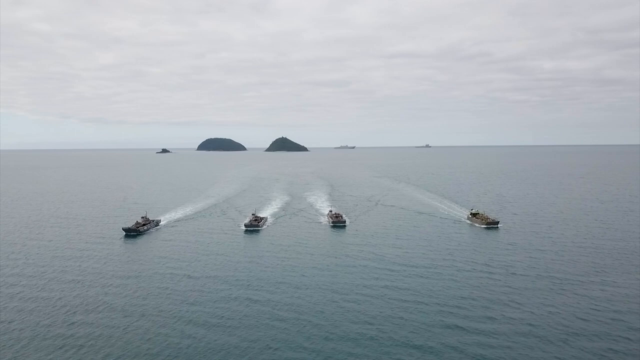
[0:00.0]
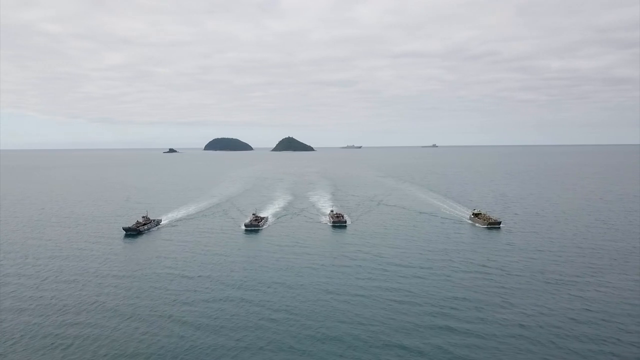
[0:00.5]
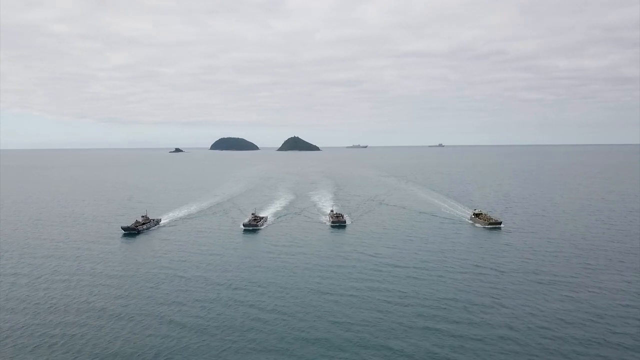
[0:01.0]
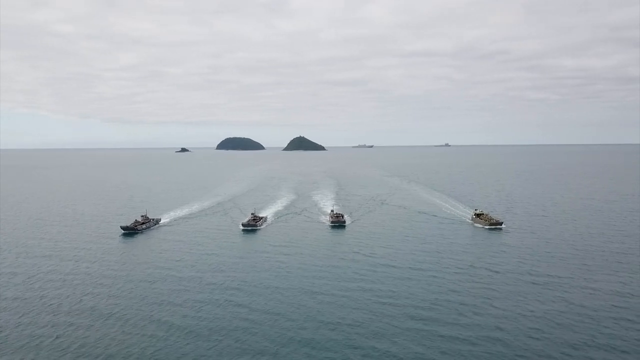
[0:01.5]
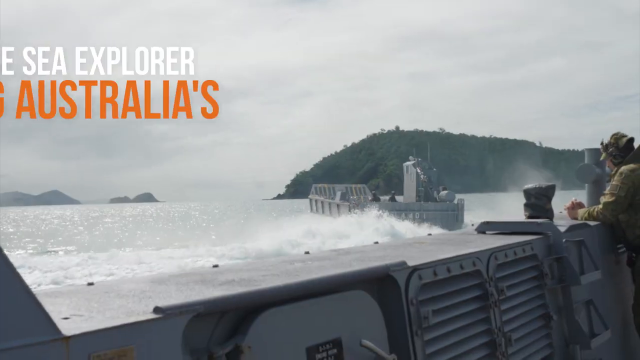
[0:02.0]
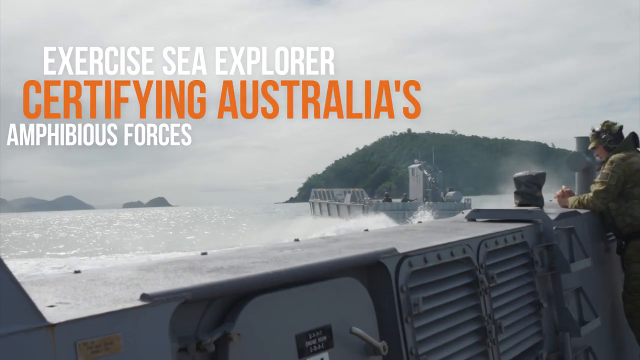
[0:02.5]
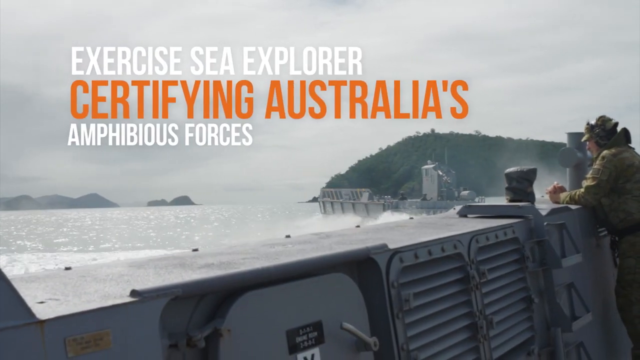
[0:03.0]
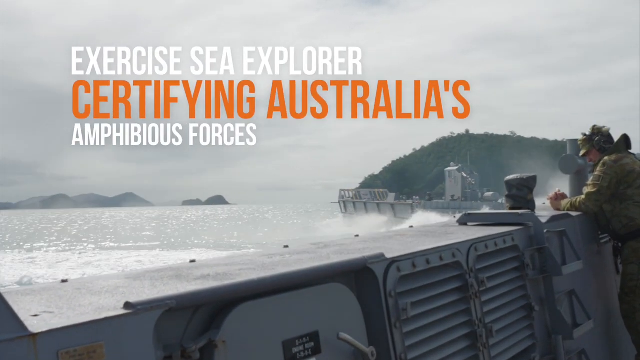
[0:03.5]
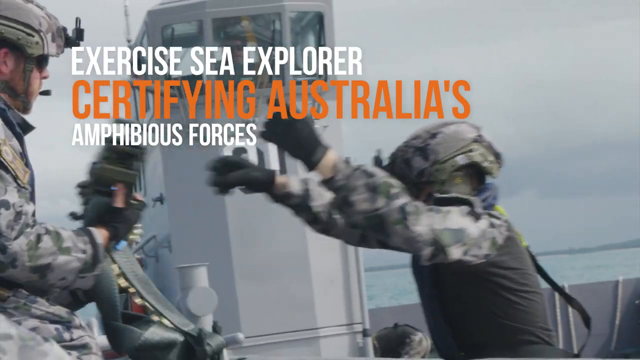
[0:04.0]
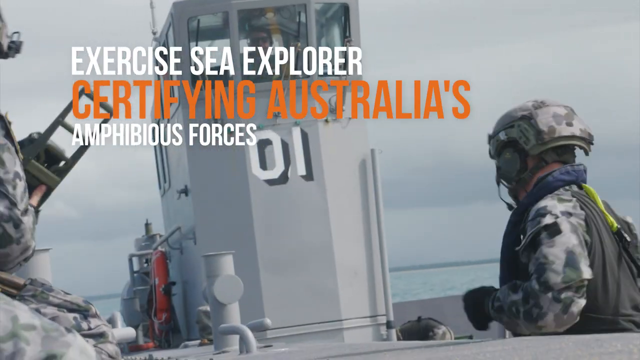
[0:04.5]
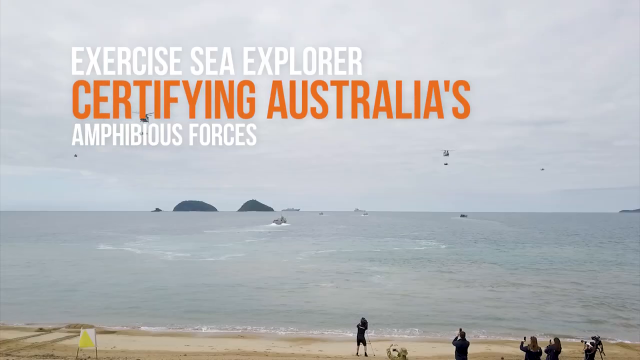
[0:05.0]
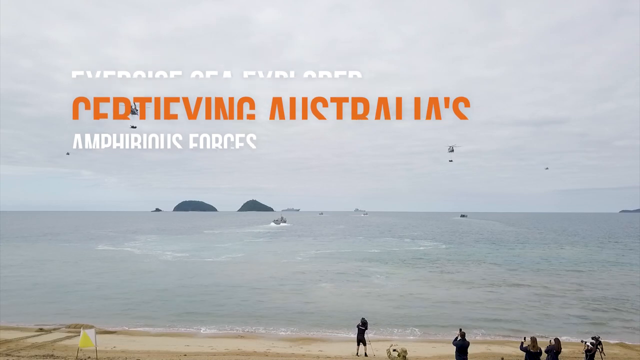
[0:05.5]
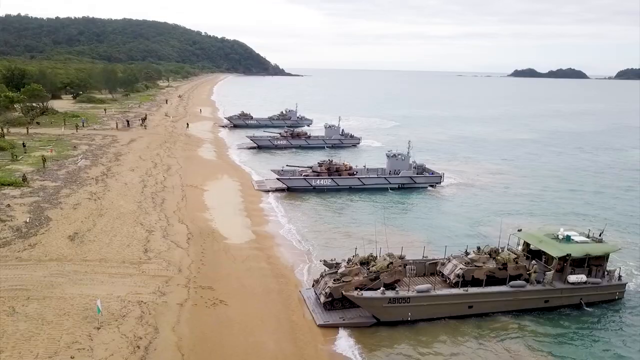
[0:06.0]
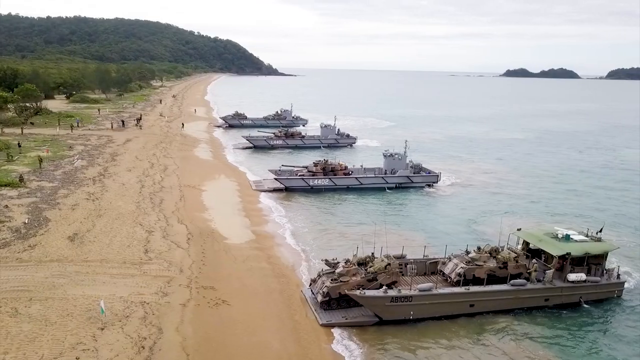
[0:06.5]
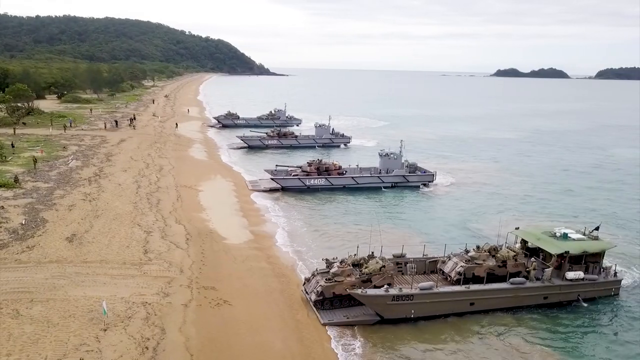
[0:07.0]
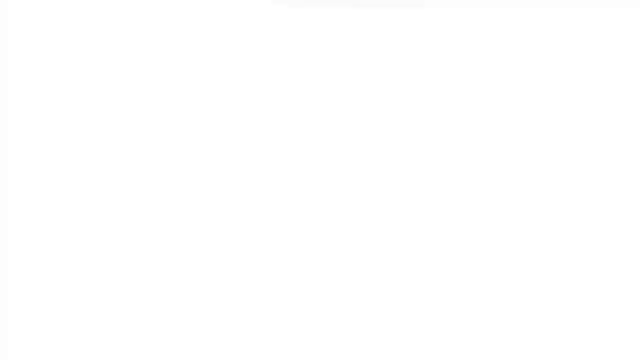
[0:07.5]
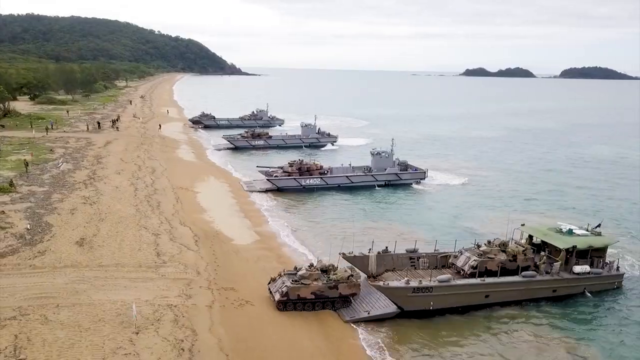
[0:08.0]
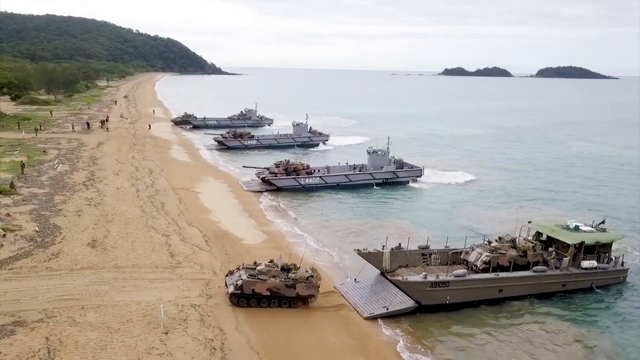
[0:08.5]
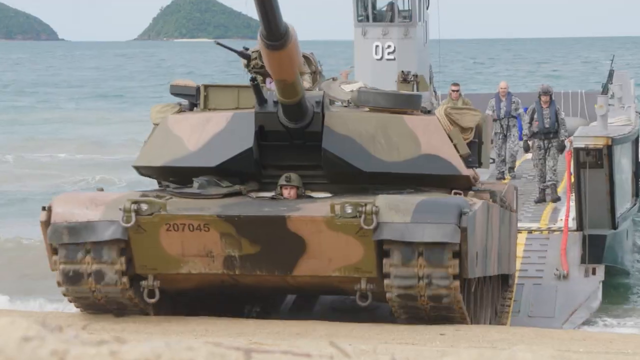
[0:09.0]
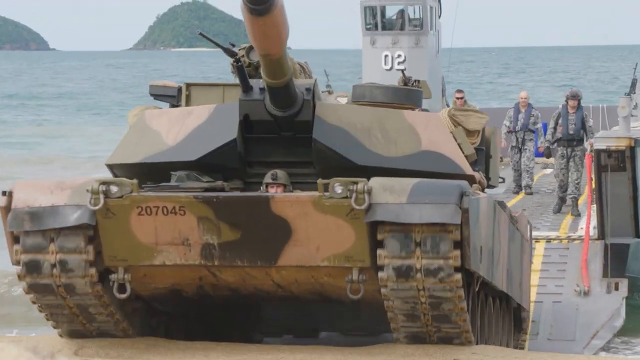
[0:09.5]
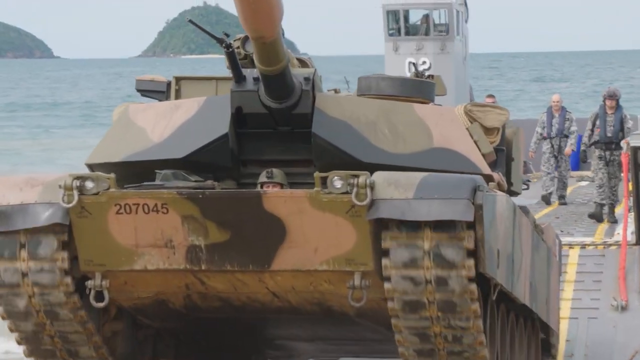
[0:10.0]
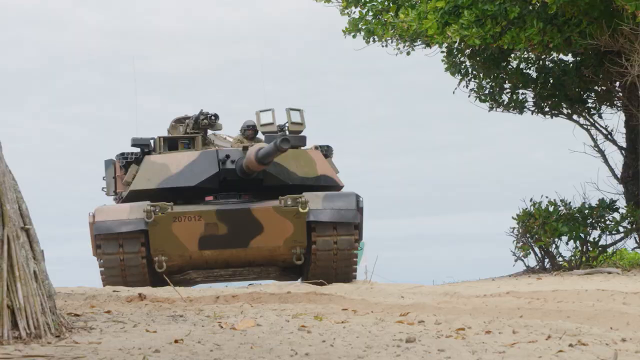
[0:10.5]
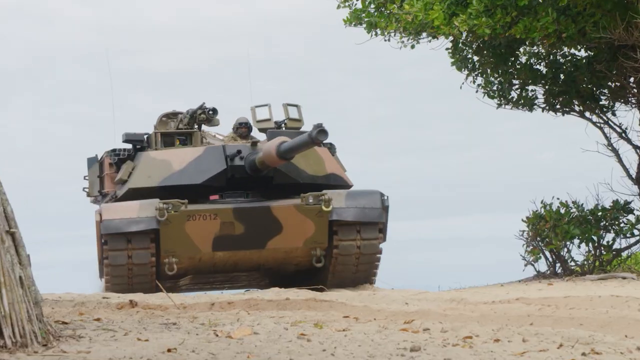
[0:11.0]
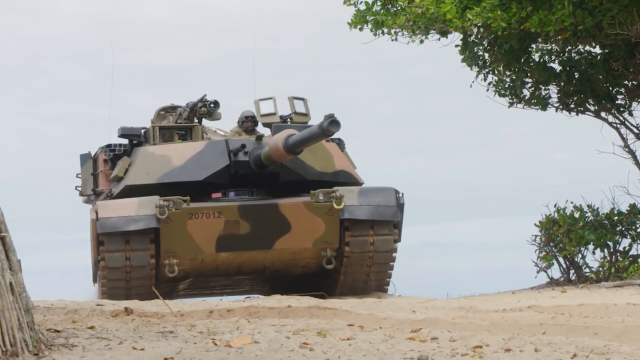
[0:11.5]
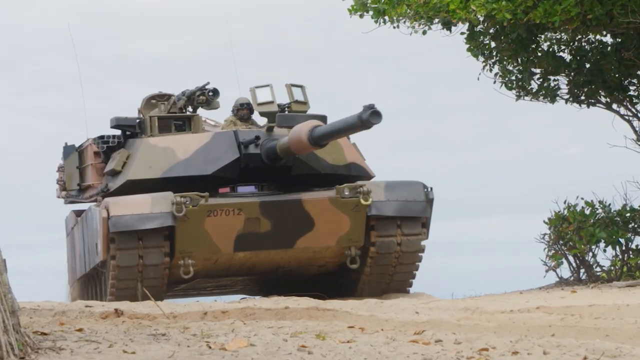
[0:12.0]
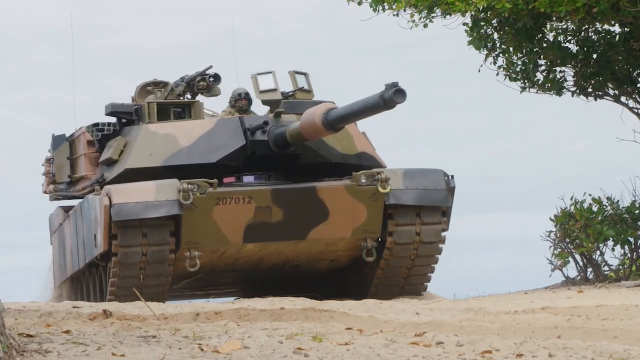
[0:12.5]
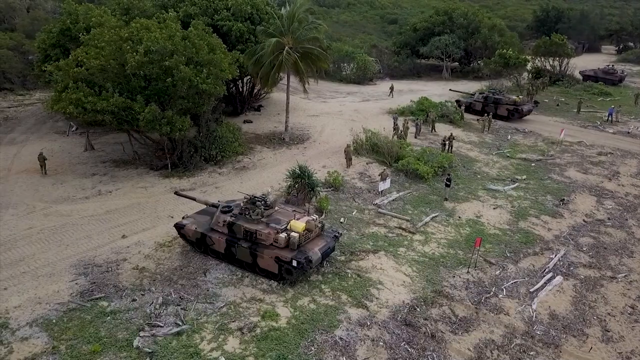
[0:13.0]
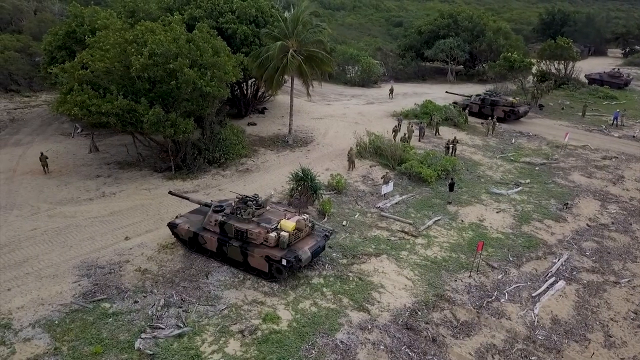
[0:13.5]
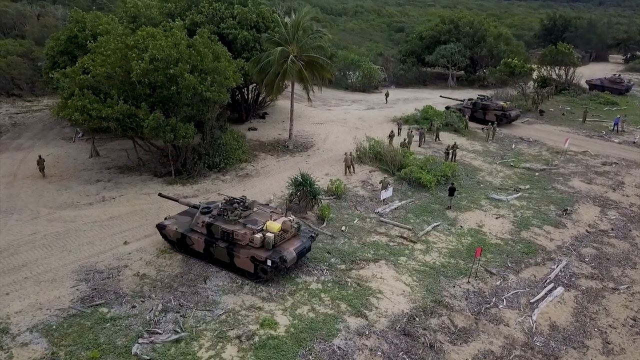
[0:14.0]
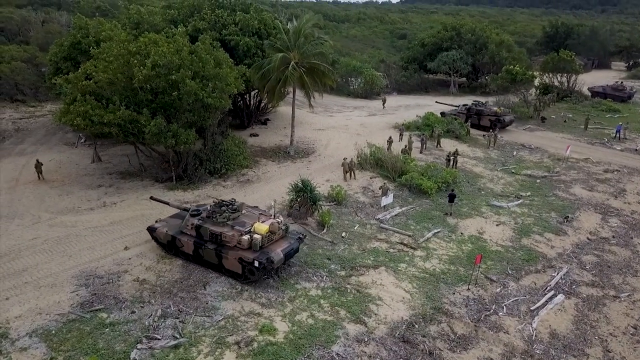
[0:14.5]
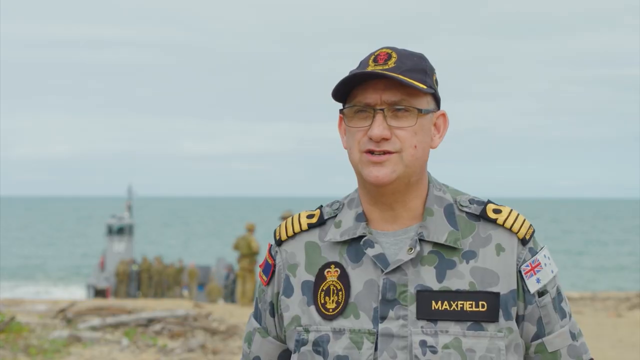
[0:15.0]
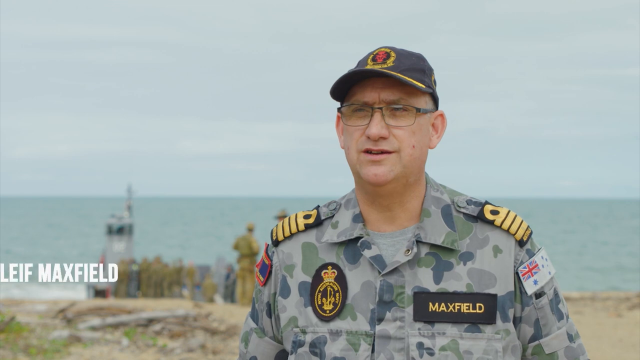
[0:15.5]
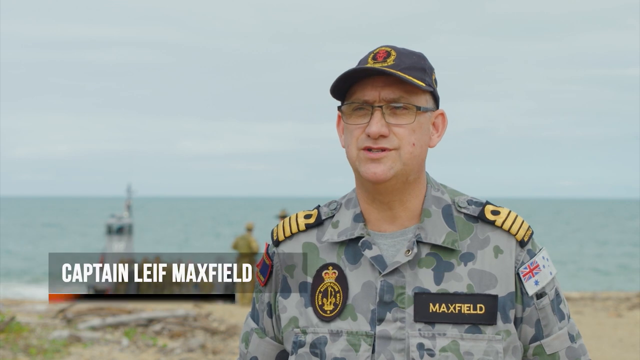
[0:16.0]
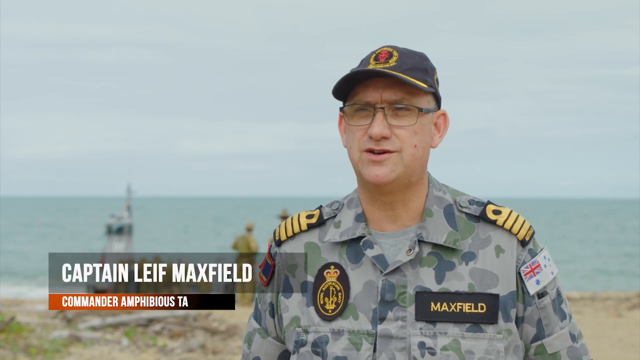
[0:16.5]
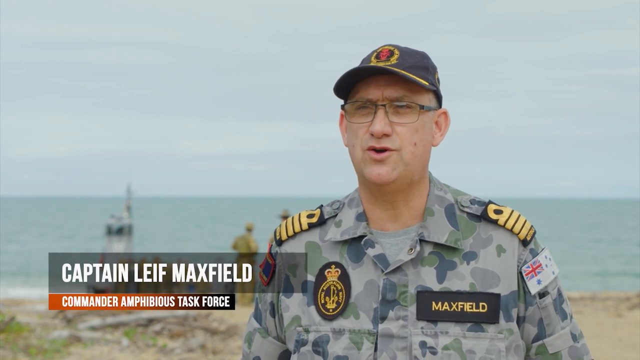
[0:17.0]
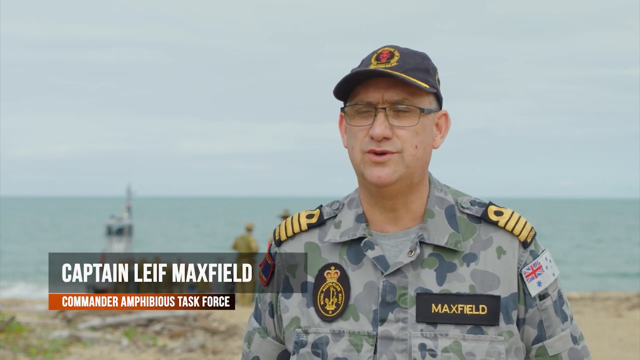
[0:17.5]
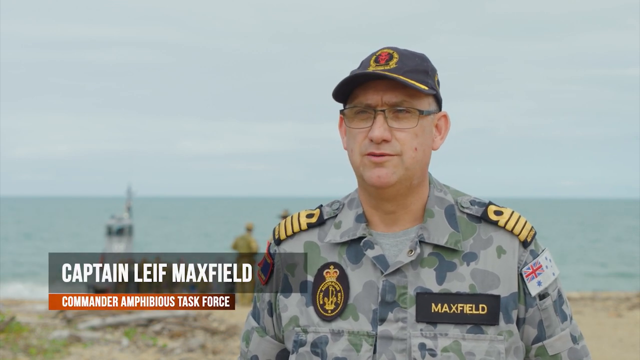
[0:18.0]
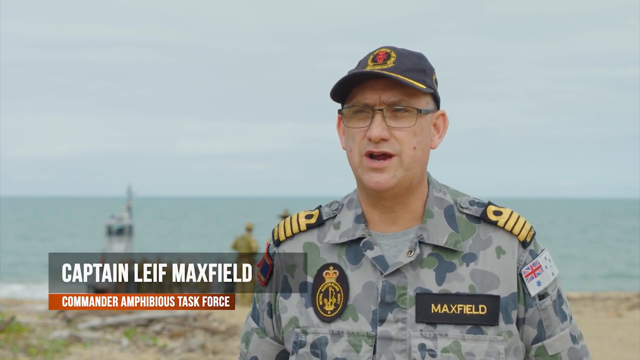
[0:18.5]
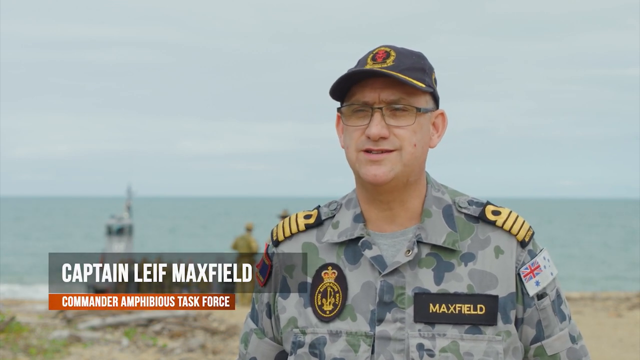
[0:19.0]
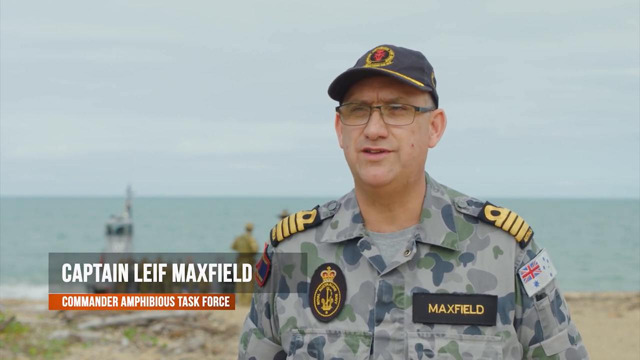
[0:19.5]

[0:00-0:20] Four boats move through an ocean, travelling from the bottom of the screen toward the top and creating waves as they go. Two rock formations are in the back and a few other boats are on the horizon. It is a gray, dark, gloomy day. The camera pans from right to left. A screen then reads "Exercise Sea Explorer, certifying Australia's amphibious forces." Two men in gray camouflage army uniforms are on a boat, holding a metal object, with windows higher up on the screen in the background. The camera then pans to the shore, where there is brown sand, greenery, a few trees and people walking around. Four boats are docked there, three gray and one greenish. Army tanks roll off the boat onto the sand; what looks like three gray army tanks appear. A close-up shows a tank in green, gray and beige camouflage, with two army personnel behind it as the tank moves and turns. An aerial view shows many army personnel and two tanks heading toward the green jungle. A man in gray camouflage, wearing a cap and glasses, with the tag "Maxfield" on his left chest, is then shown; he is Captain Maxfield, commander of the Amphibious Task Force.